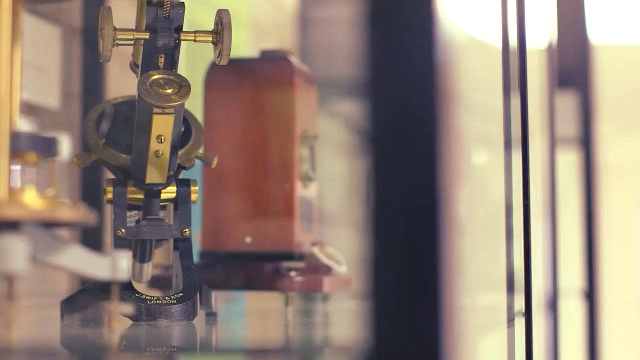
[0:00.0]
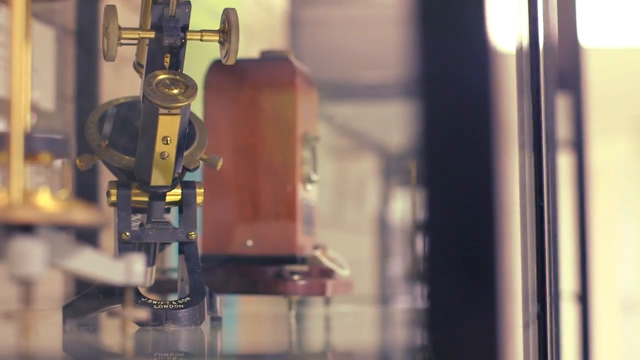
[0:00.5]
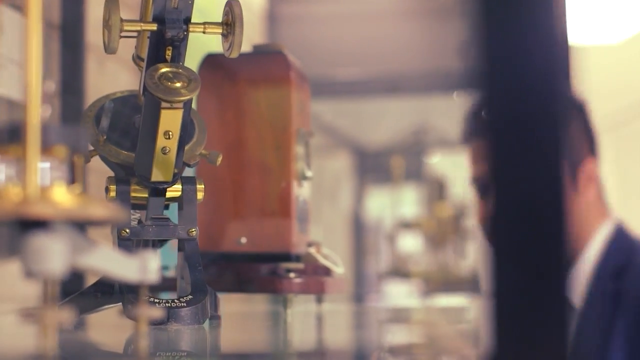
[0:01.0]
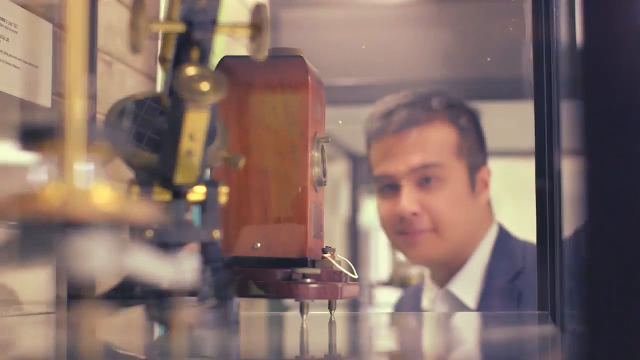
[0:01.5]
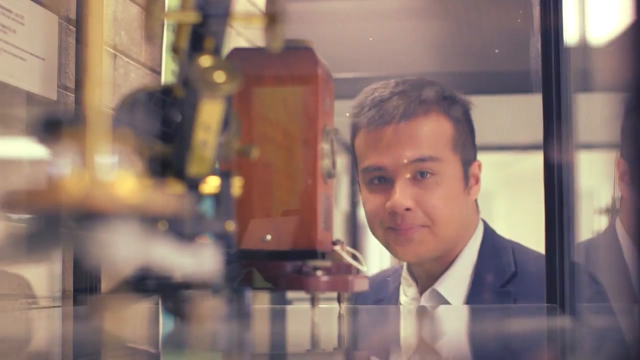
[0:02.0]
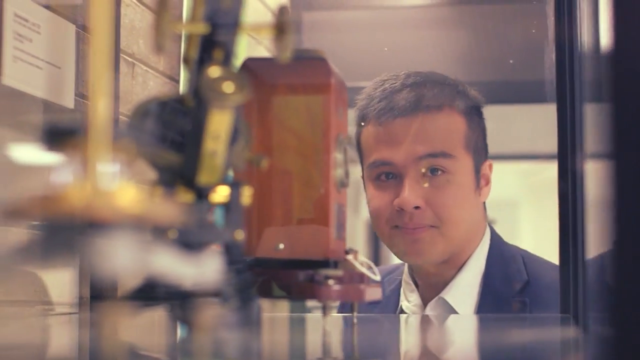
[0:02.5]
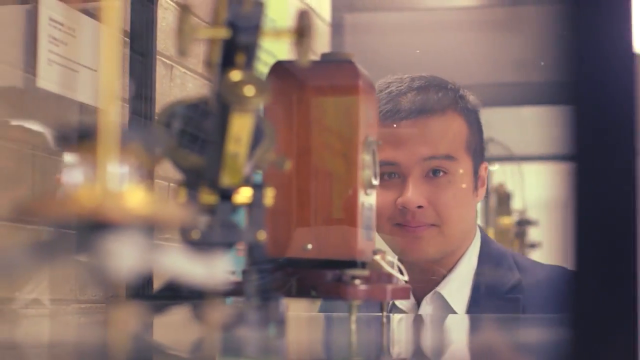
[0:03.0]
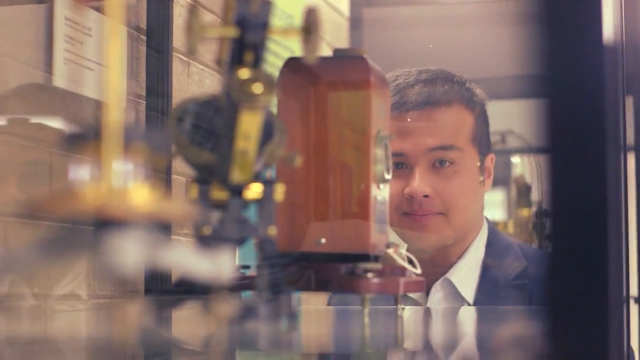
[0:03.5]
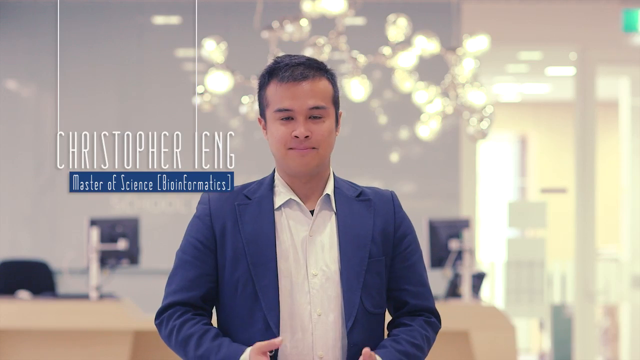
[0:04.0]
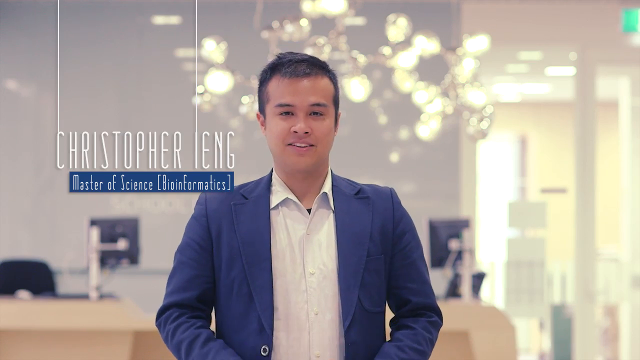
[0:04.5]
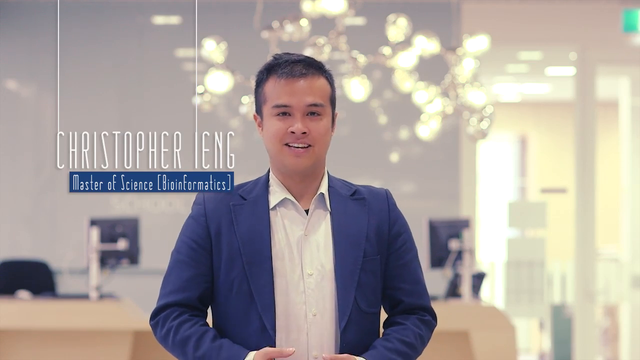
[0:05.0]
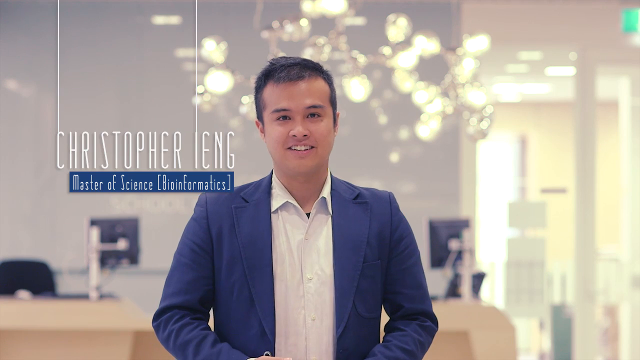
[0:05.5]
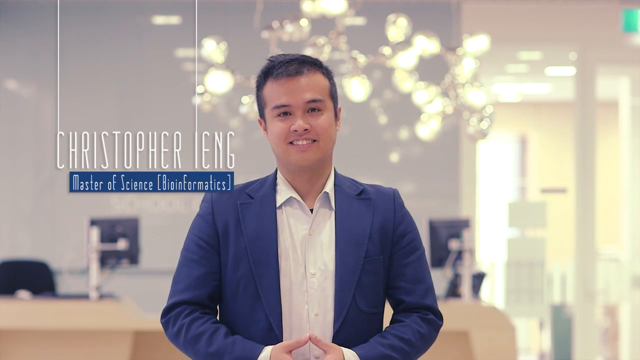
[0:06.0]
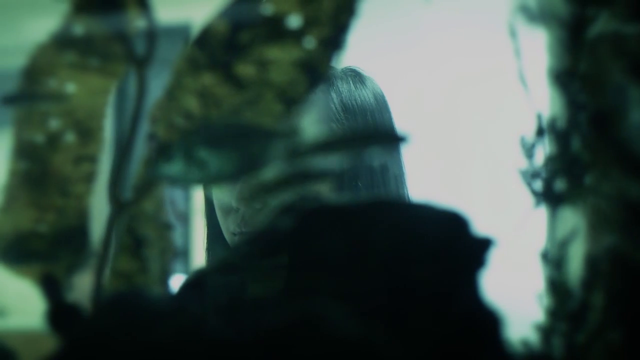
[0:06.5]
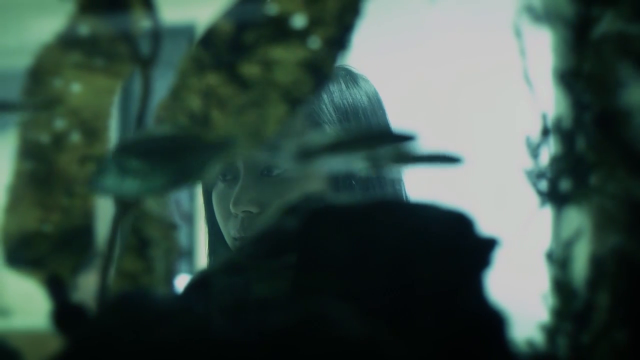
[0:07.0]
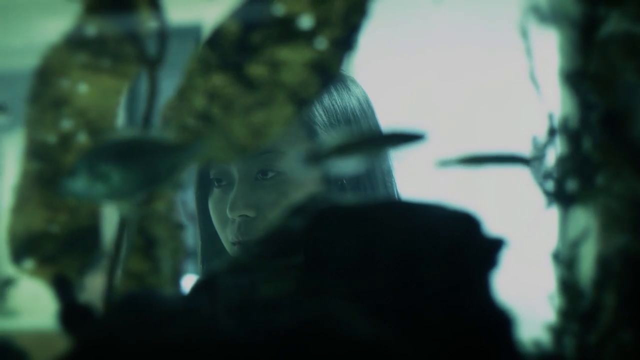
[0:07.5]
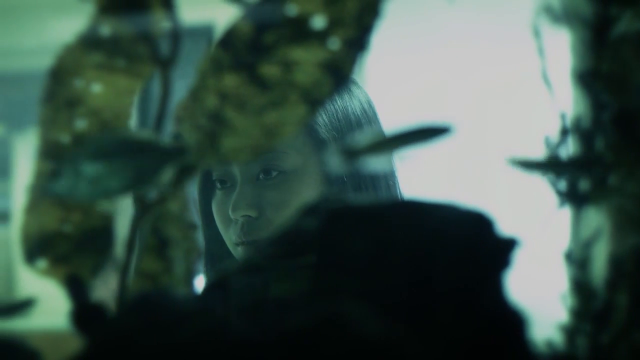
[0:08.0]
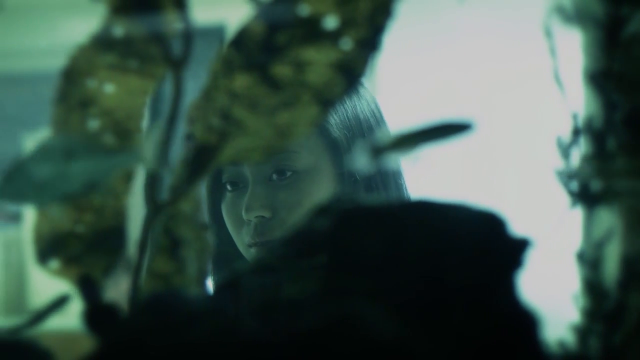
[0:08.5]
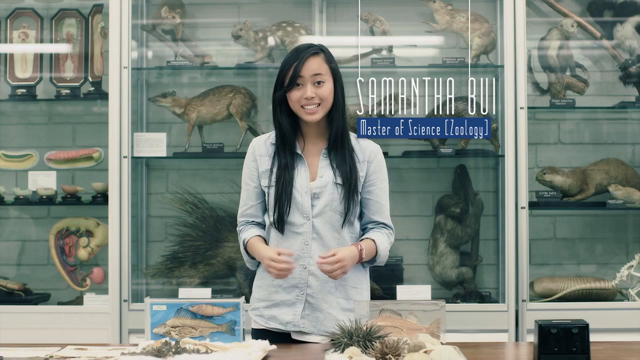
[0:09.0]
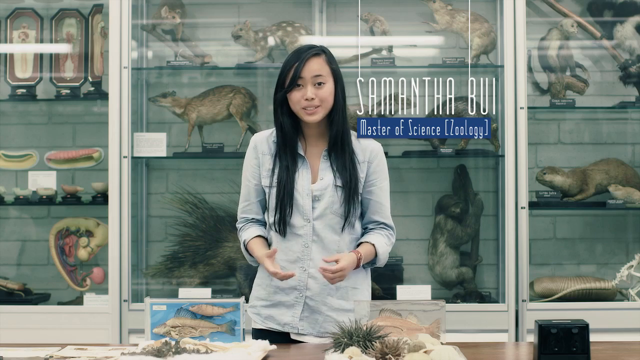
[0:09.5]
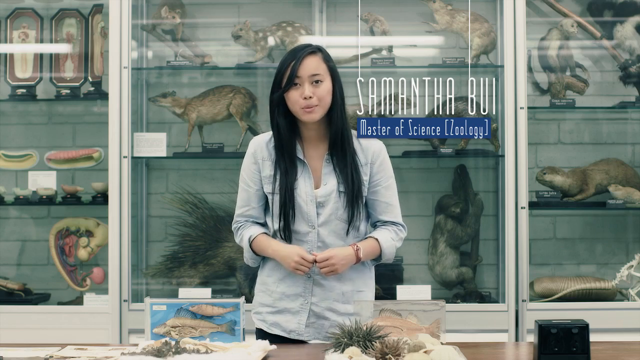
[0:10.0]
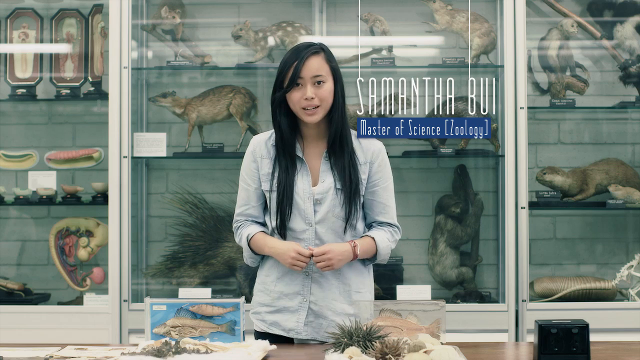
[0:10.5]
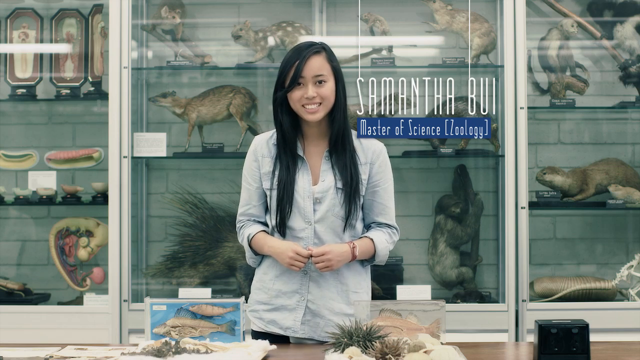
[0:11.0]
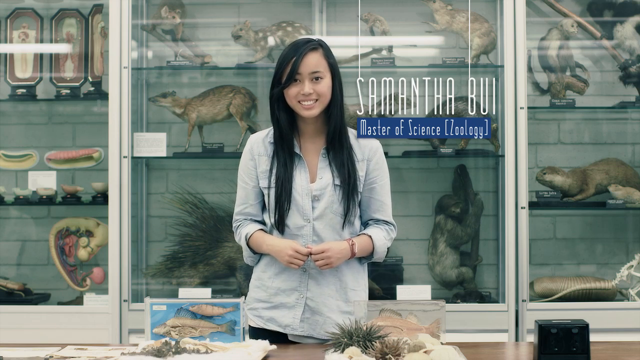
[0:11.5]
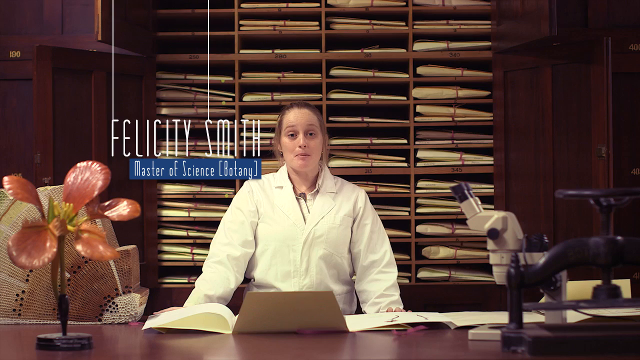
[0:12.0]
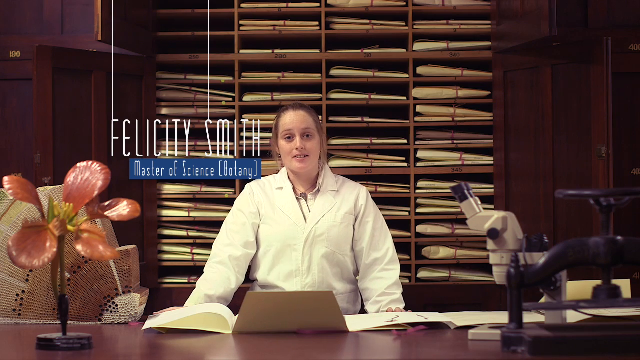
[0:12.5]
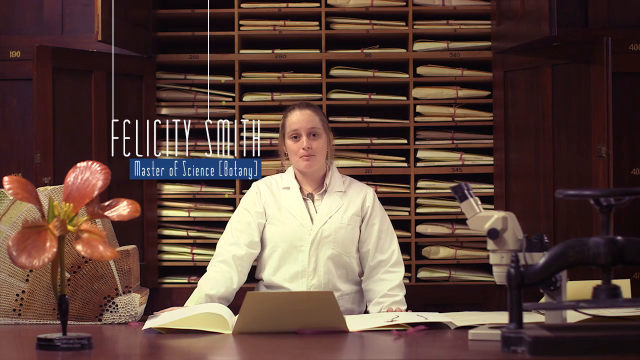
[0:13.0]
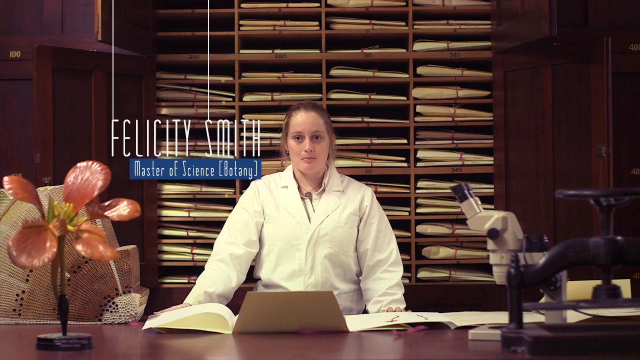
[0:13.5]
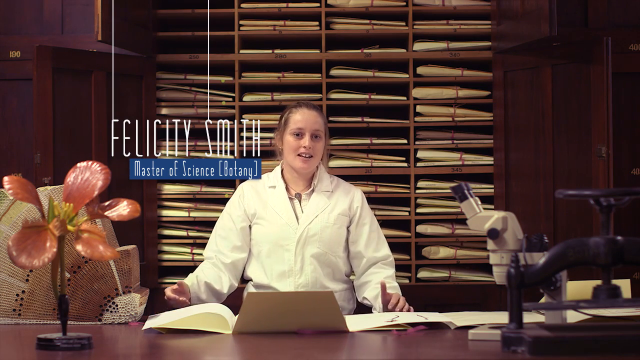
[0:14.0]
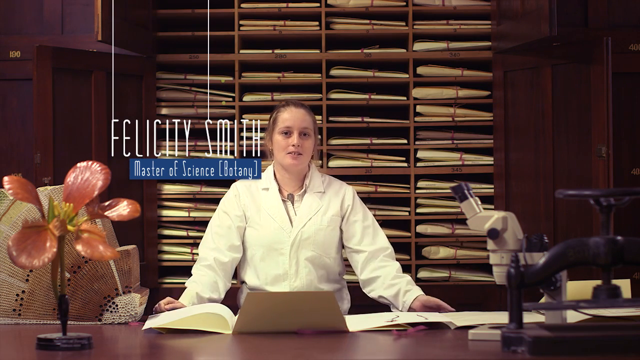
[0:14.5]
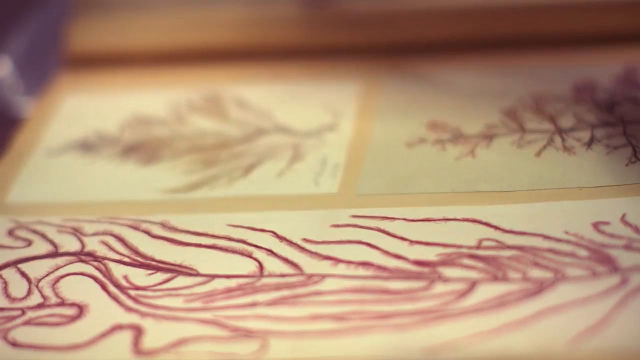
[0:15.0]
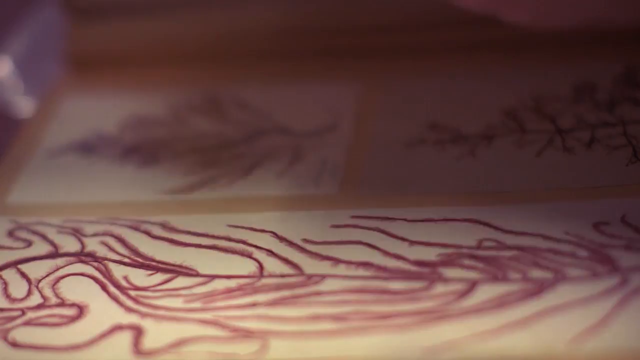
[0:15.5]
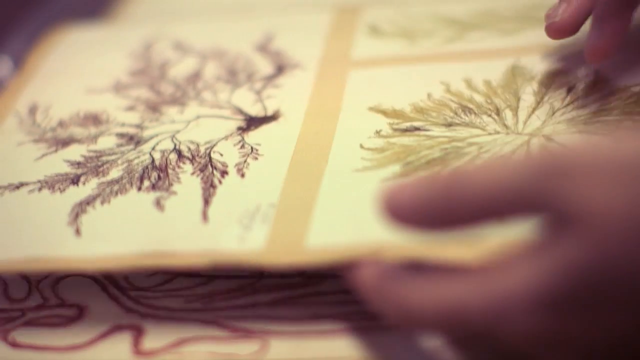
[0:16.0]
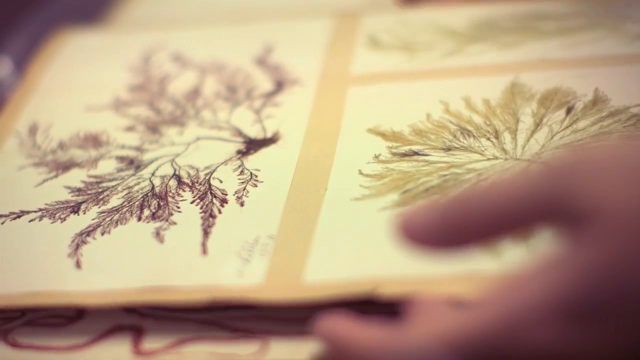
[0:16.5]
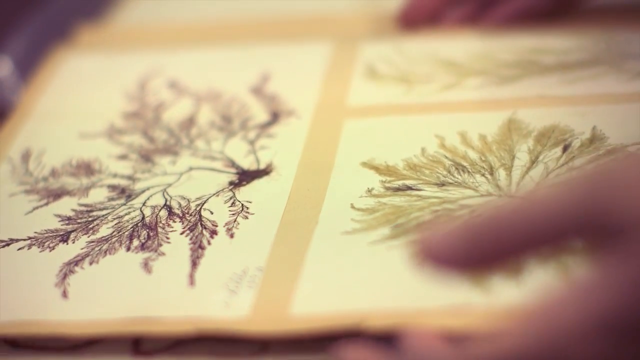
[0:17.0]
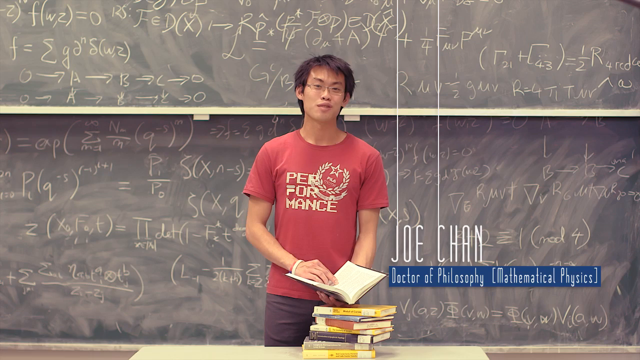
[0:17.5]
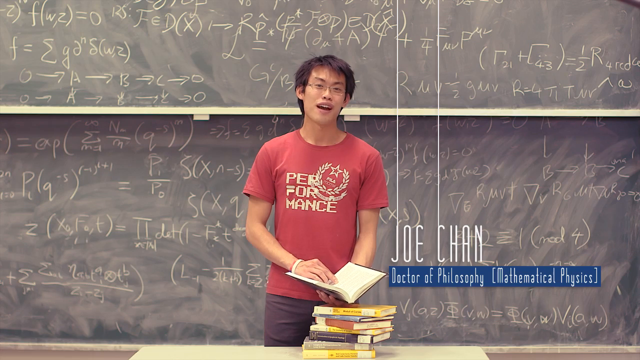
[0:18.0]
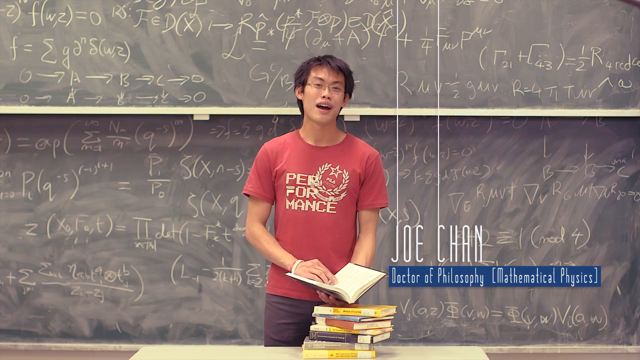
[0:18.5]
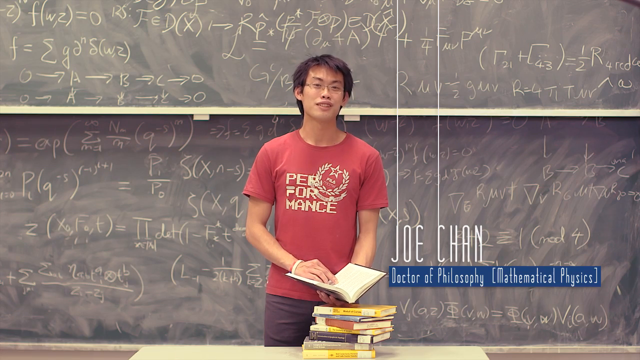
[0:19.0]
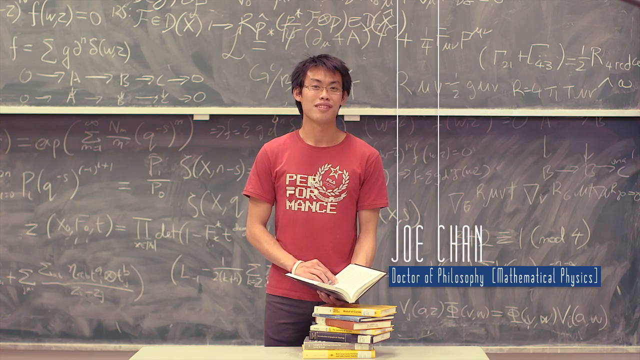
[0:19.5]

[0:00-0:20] A young-looking man, possibly Asian, wears a blazer and a white button-up shirt with no tie. He looks into a display case. He speaks into the camera, and his name appears: "Christopher Ng, Master of Science (Bioformatics)". Next, an Asian woman's face is visible, seemingly filmed through an aquarium, with fish swimming by; she is Samanthi Bhui, Master of Science in Zoology. Another woman, Felicity Smith, Master of Science in Botany, wears a white lab coat and has a microscope to her right on a desk. Then Joe Chan, Director of Philosophy, appears with a blackboard completely filled with mathematical equations behind him. He wears a red shirt that says "performance".